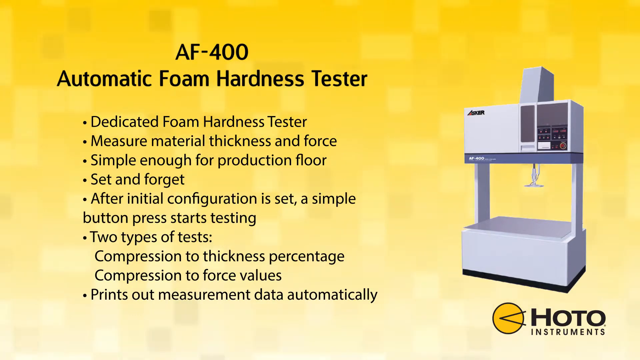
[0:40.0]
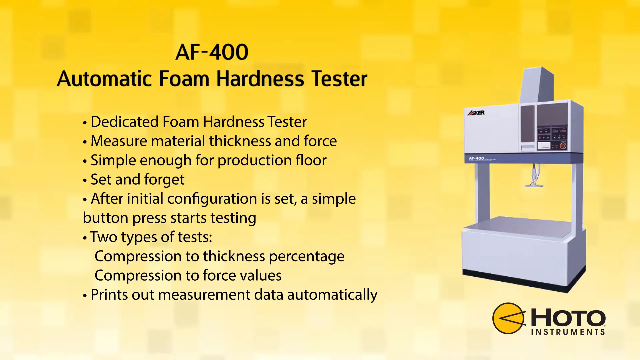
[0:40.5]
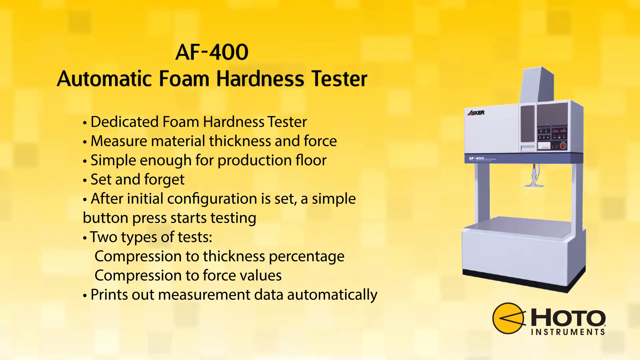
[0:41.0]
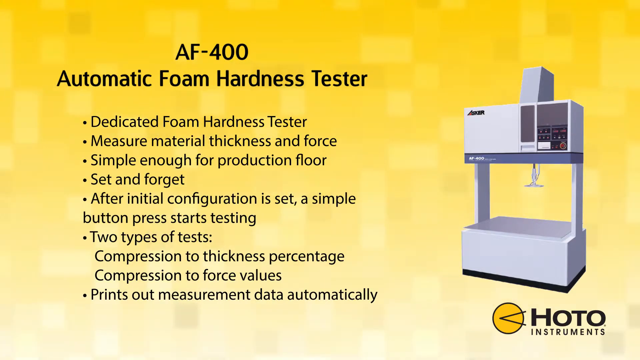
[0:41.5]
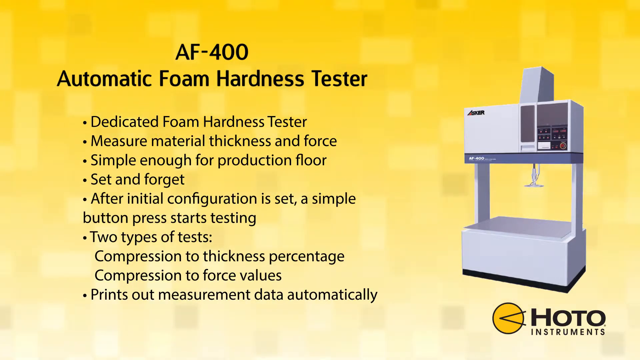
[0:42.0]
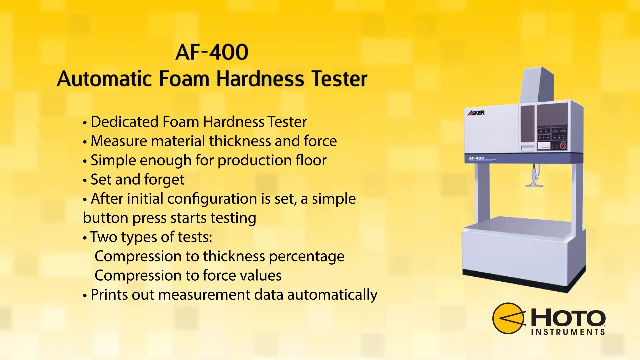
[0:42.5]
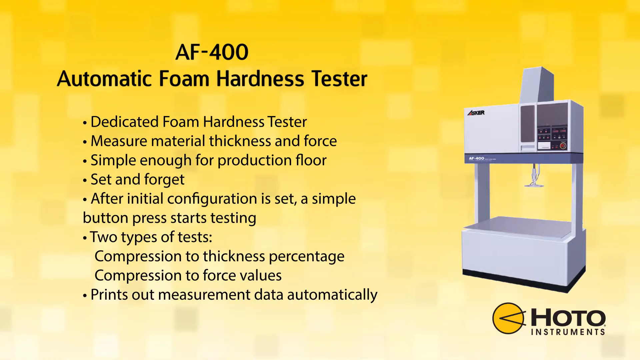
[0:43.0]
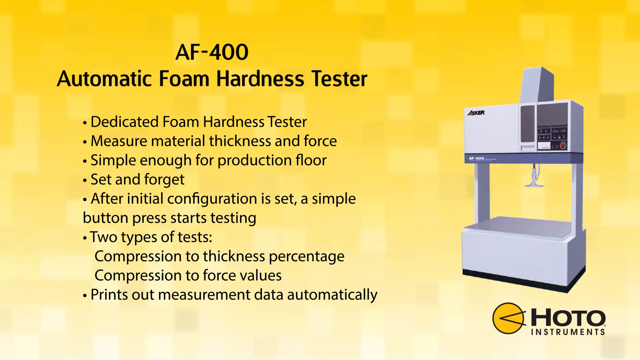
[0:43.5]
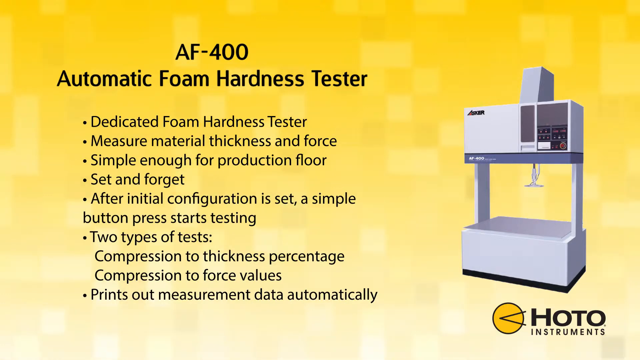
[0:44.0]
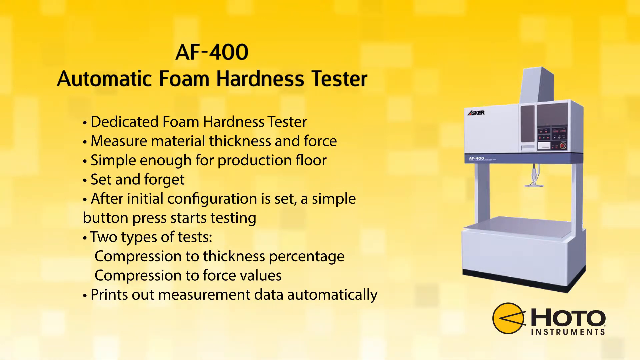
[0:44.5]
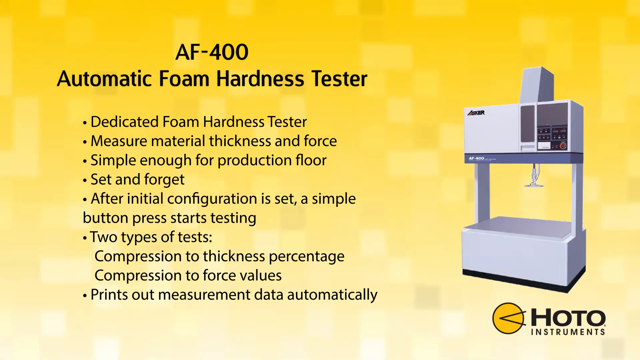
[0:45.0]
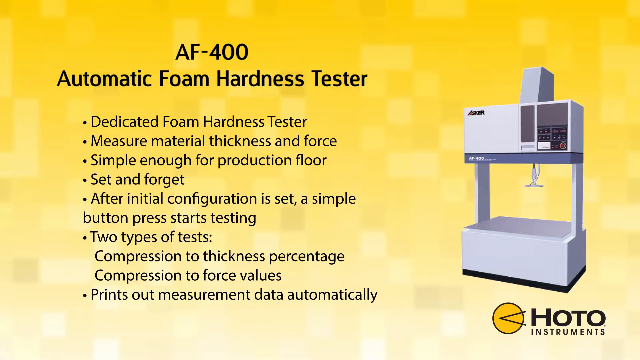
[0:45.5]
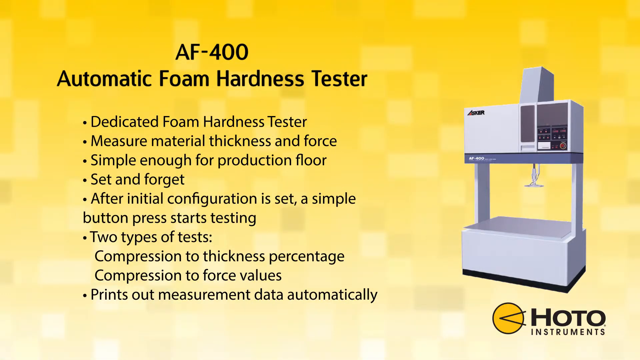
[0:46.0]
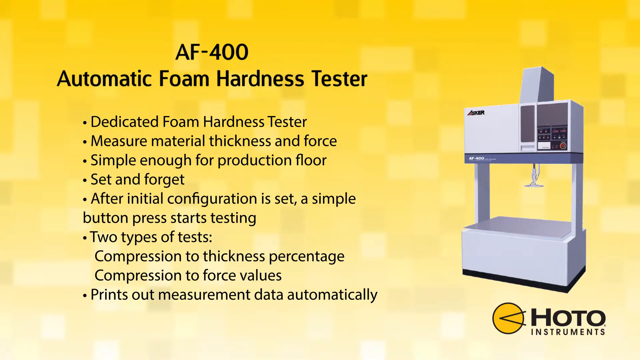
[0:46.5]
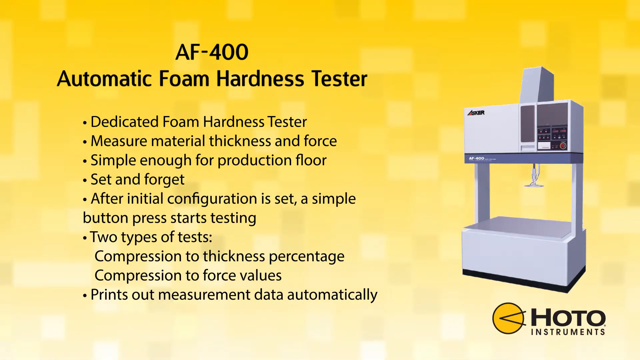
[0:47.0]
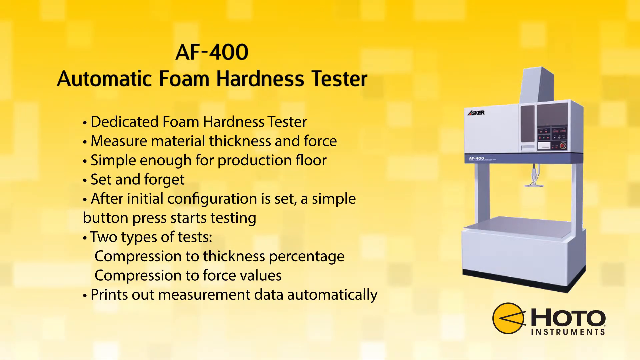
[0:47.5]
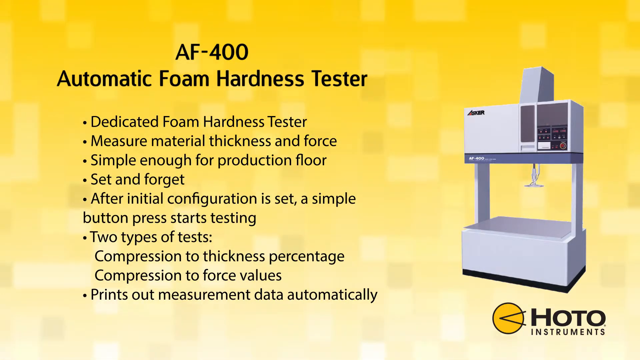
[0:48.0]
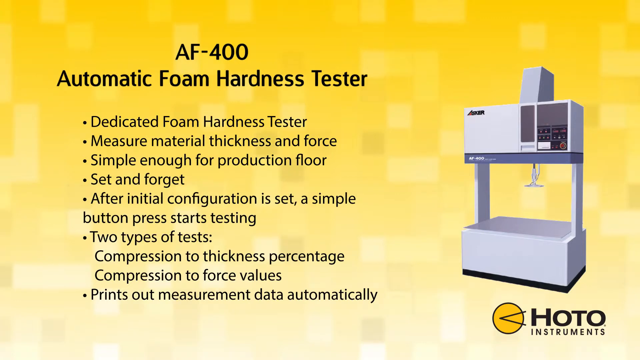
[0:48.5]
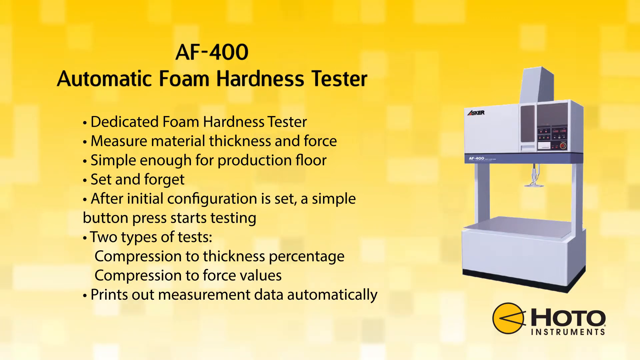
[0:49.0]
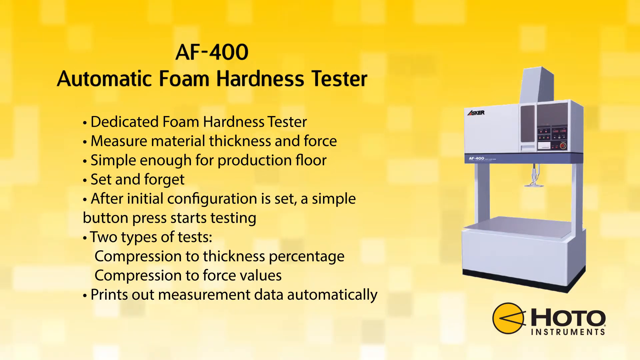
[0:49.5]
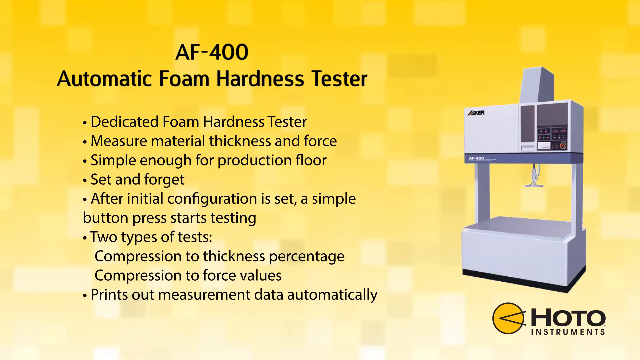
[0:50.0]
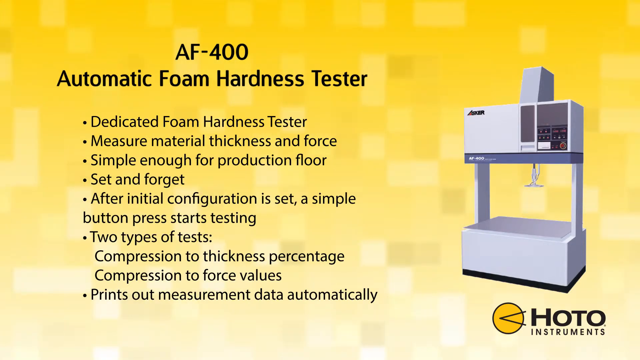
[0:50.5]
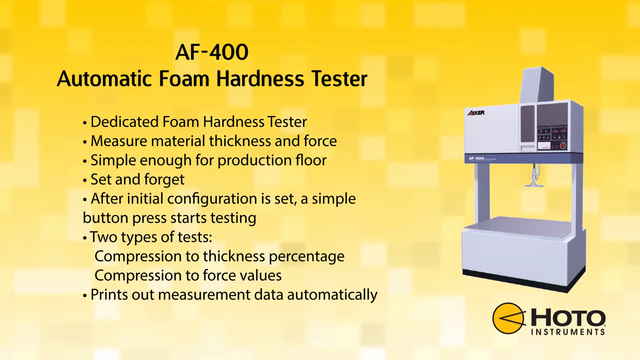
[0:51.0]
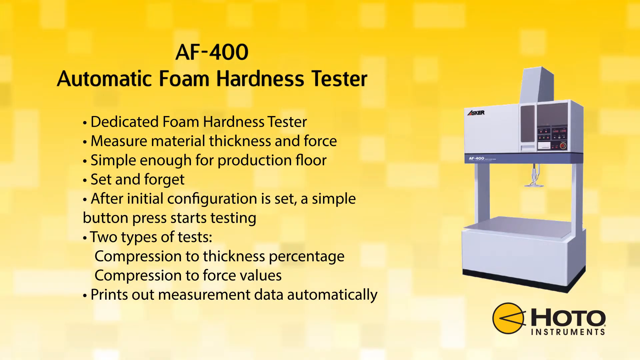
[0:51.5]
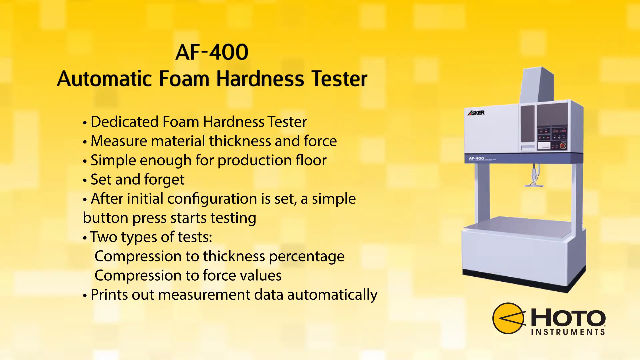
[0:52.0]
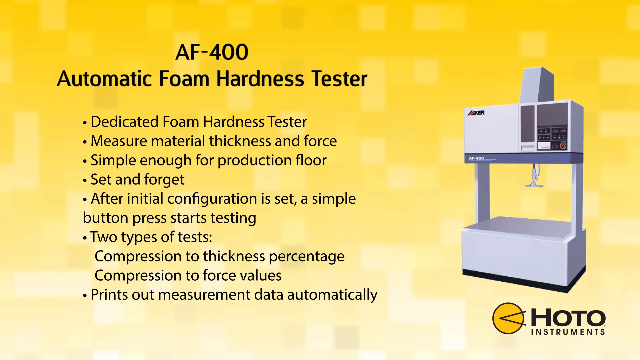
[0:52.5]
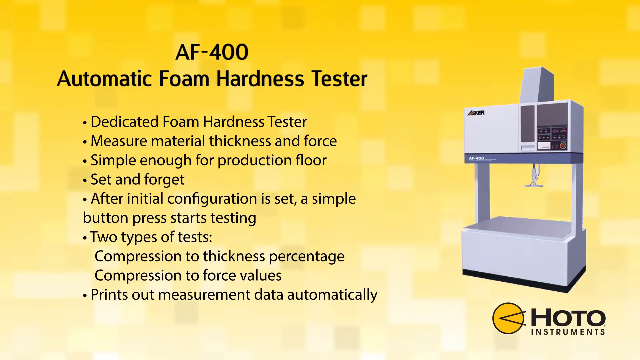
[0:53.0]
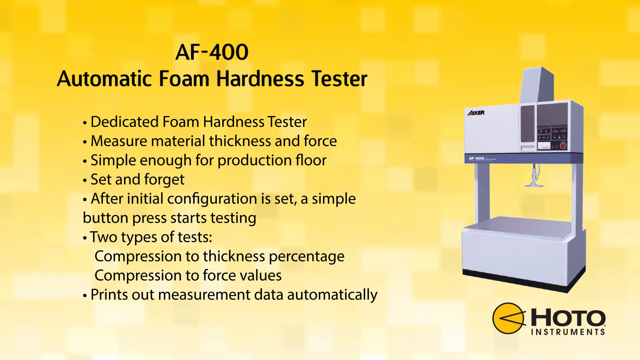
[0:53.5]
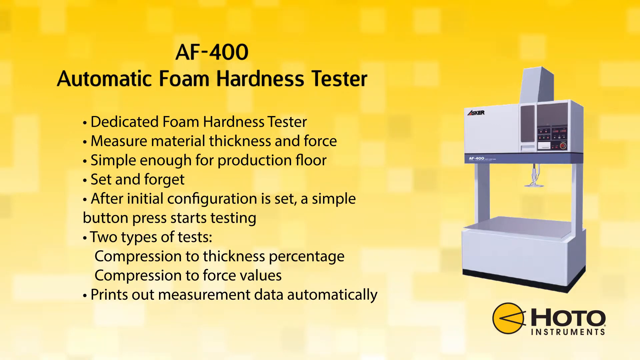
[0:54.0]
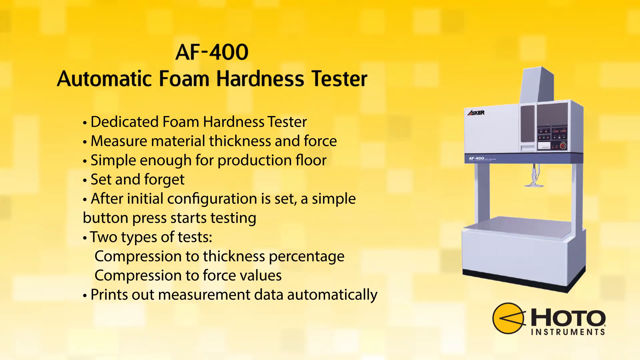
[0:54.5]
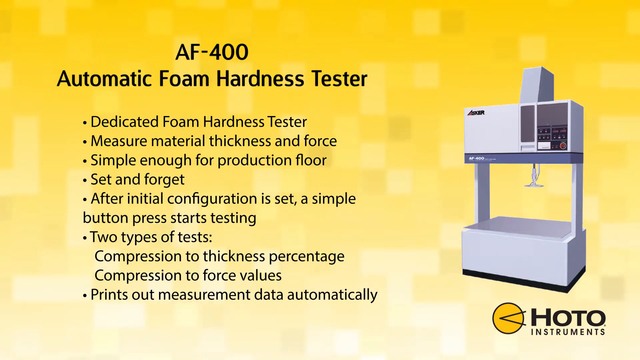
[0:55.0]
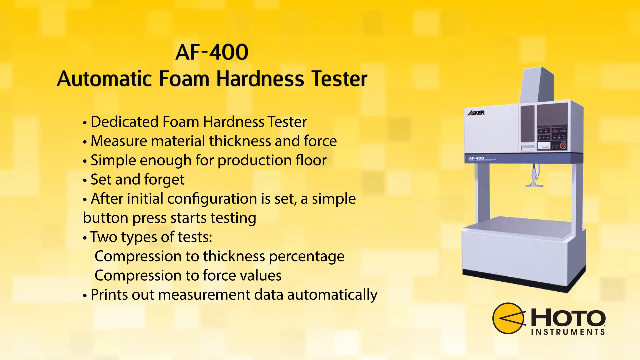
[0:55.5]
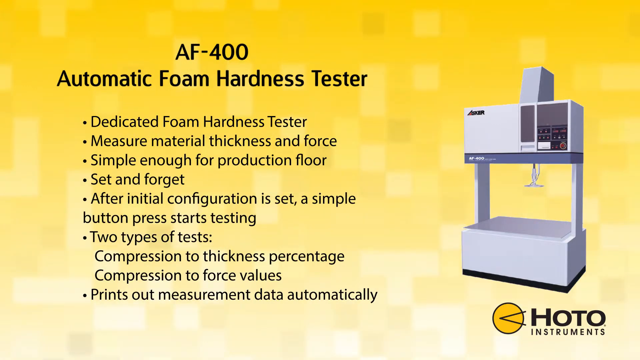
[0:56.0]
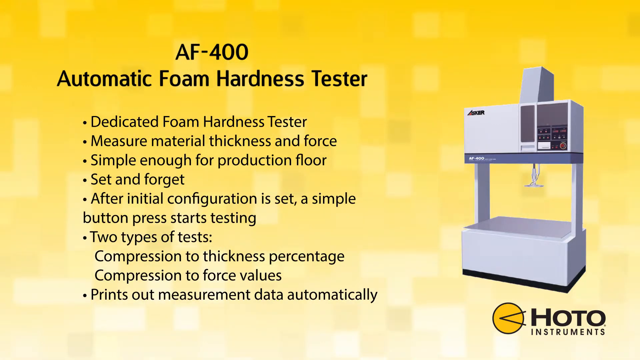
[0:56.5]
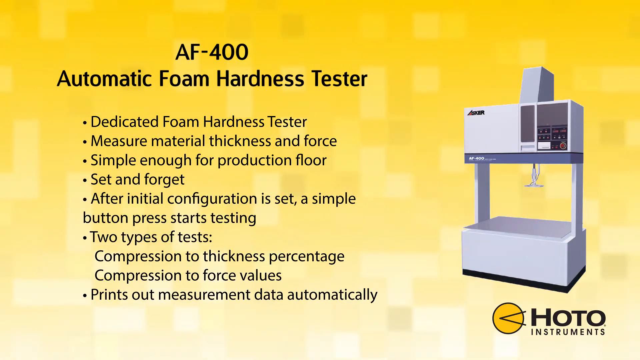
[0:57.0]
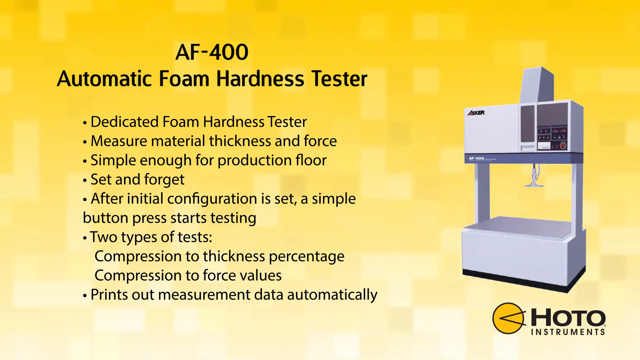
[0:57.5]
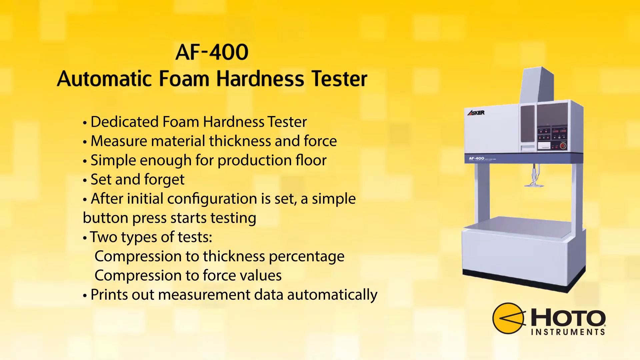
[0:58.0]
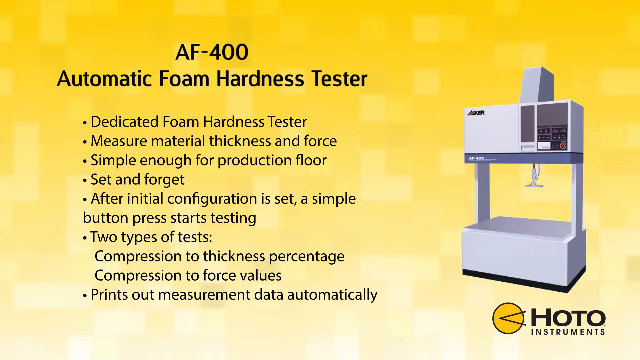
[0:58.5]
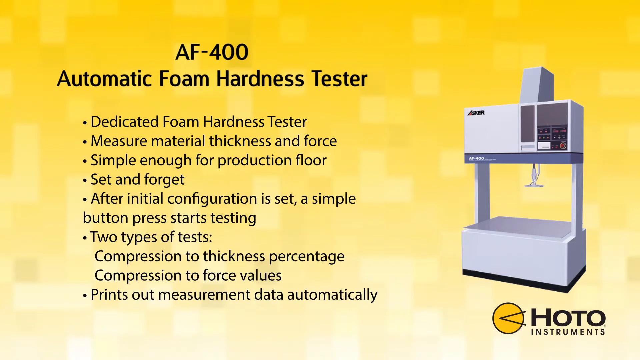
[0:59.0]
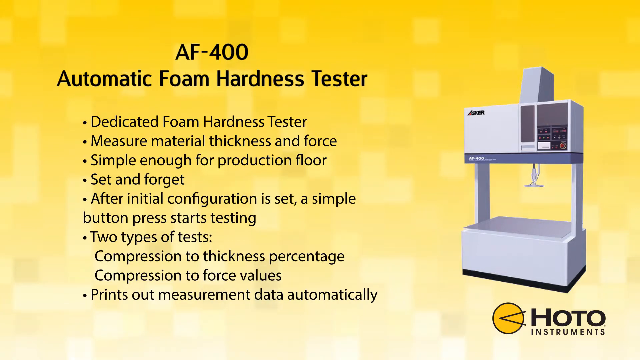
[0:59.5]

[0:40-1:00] The same slide continues. The background starts with a darker golden yellow at the top, moves down to a lighter yellow, and the bottom is a kind of grayed-out black. In the bottom right corner is the HOTO logo, a small logo with a circle and a greater-than symbol; the darkness at the bottom of the slide kind of covers it up. A picture shows the piece of machinery, which looks pretty simple. The slide is about the AF-400 automatic foam hardness tester and has eight bullet points with facts about it. The background shows a blinking pixelation.